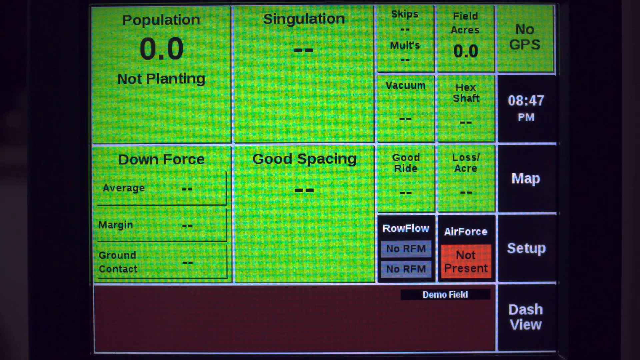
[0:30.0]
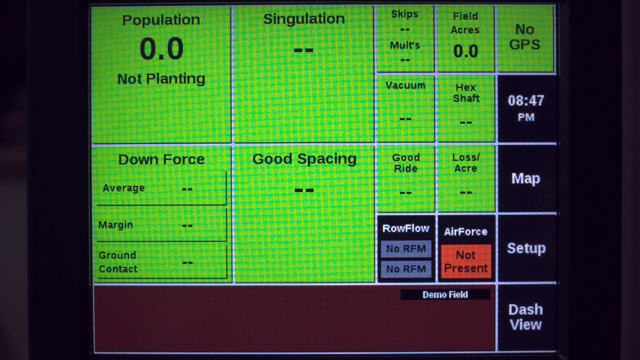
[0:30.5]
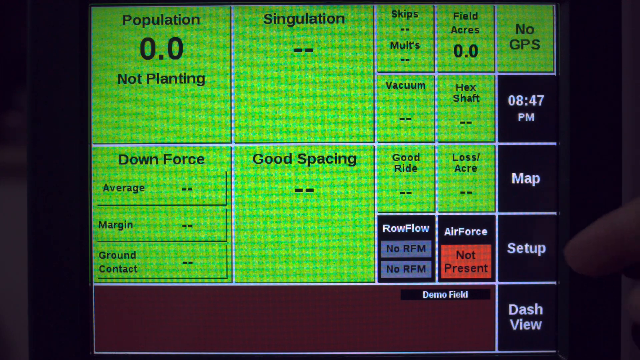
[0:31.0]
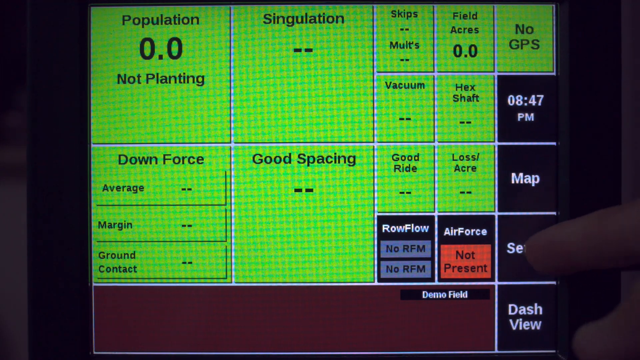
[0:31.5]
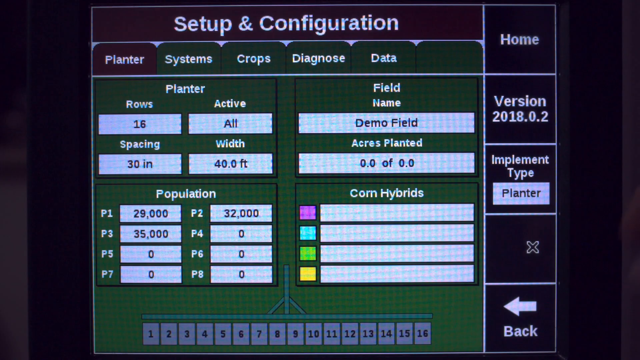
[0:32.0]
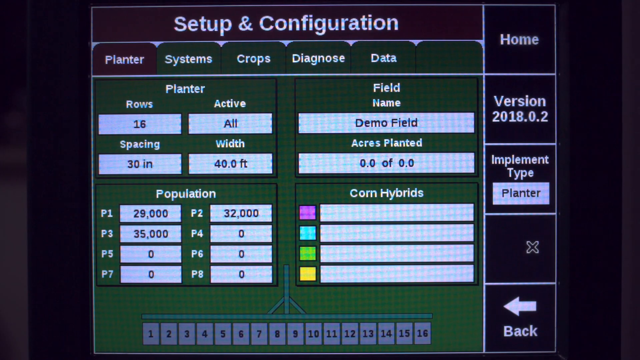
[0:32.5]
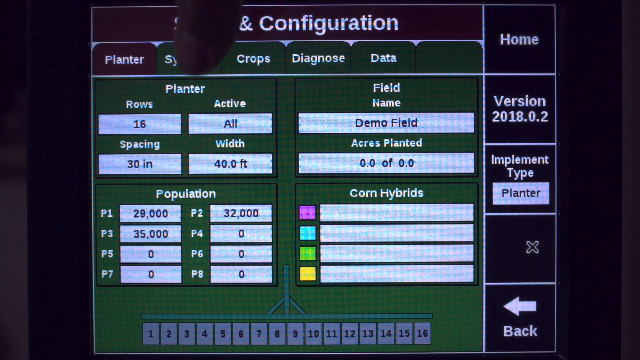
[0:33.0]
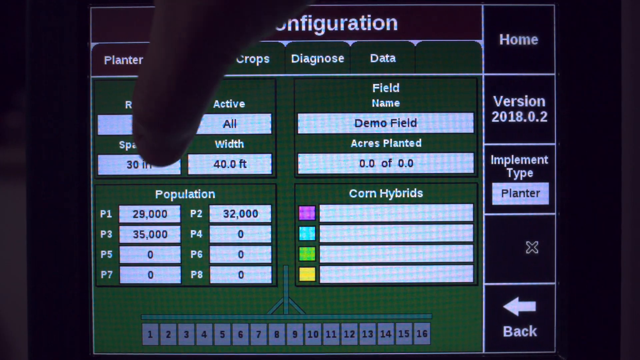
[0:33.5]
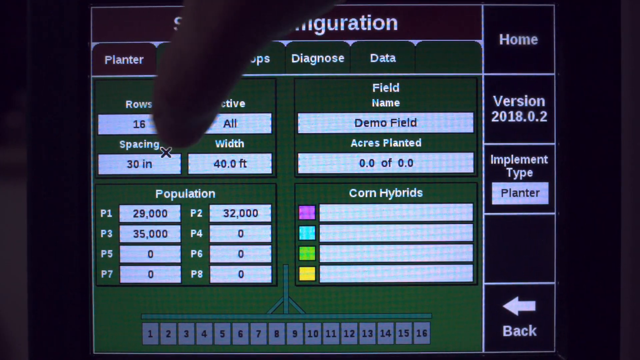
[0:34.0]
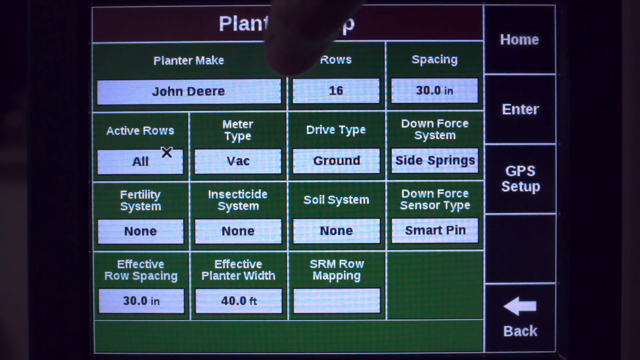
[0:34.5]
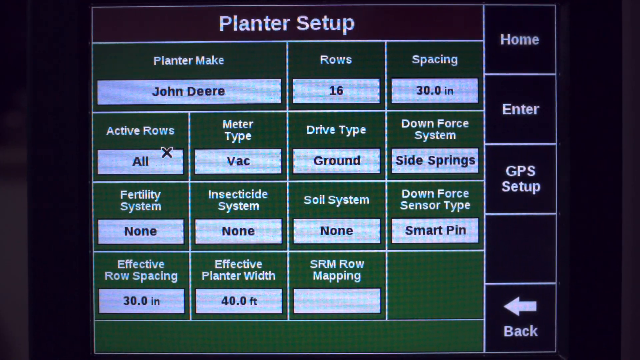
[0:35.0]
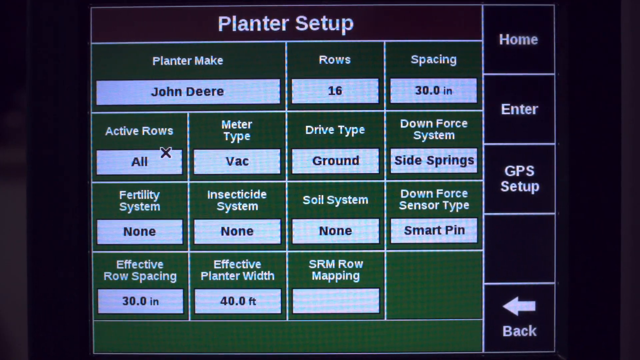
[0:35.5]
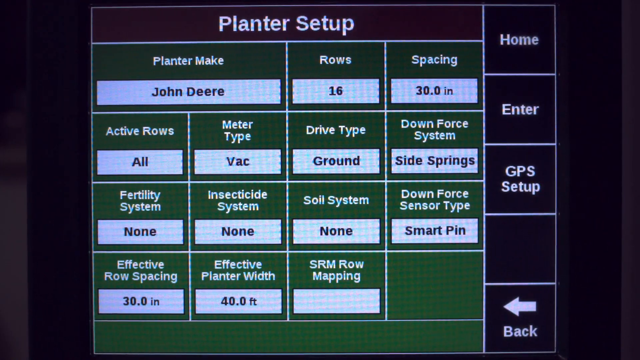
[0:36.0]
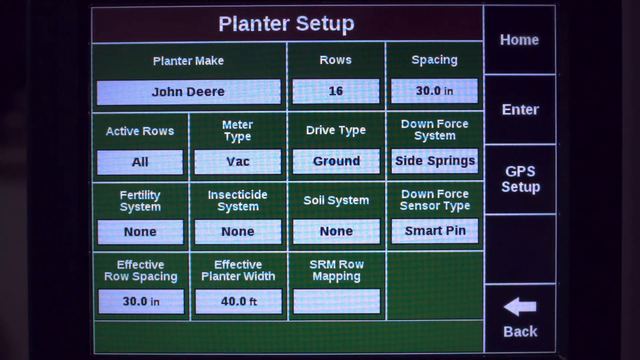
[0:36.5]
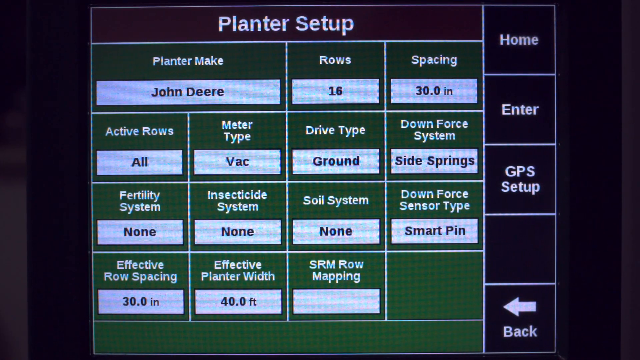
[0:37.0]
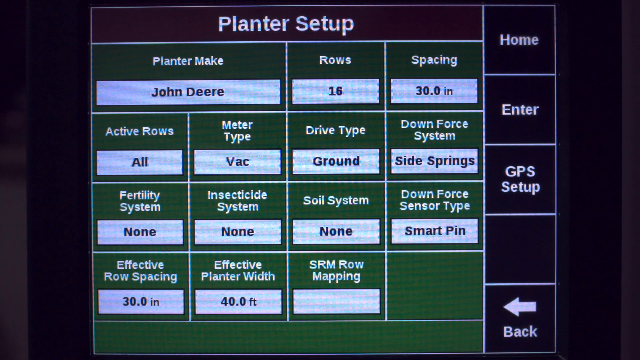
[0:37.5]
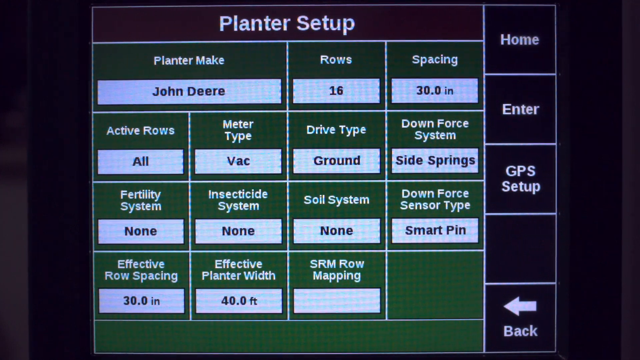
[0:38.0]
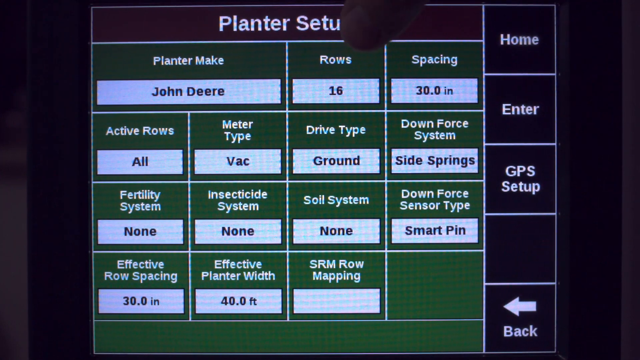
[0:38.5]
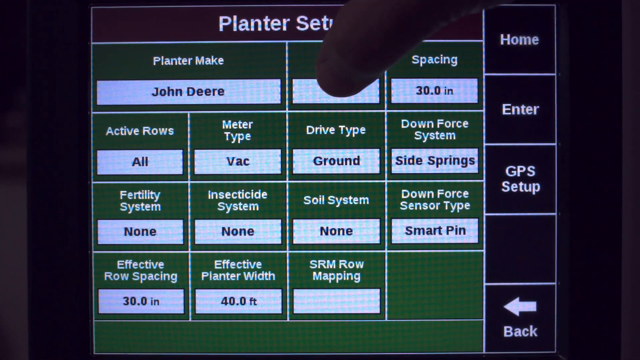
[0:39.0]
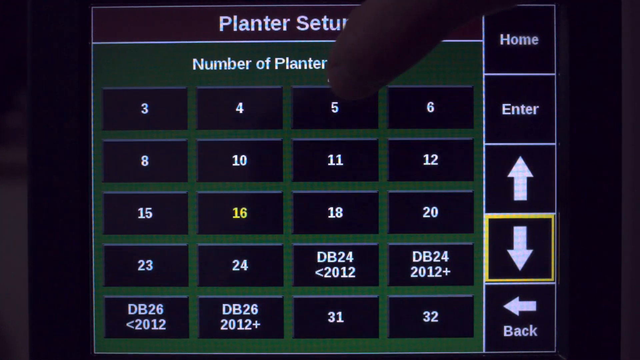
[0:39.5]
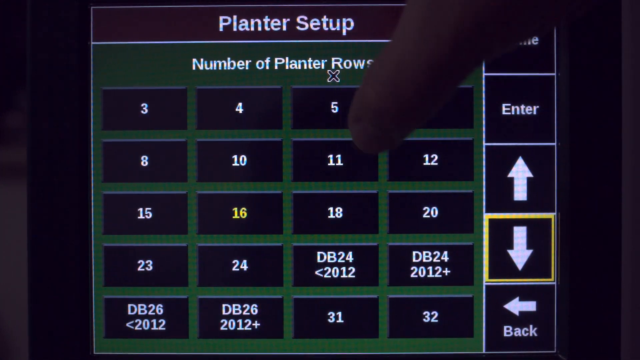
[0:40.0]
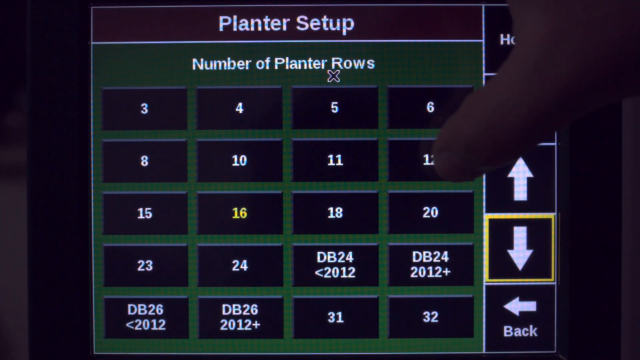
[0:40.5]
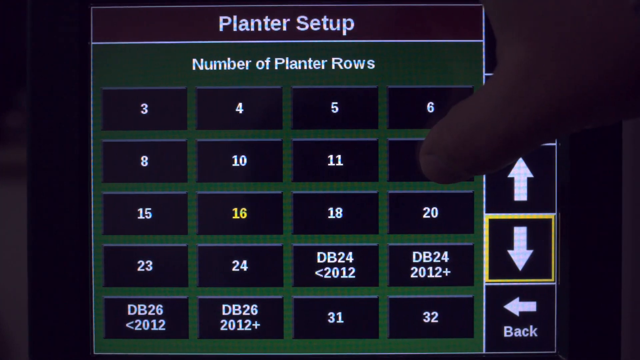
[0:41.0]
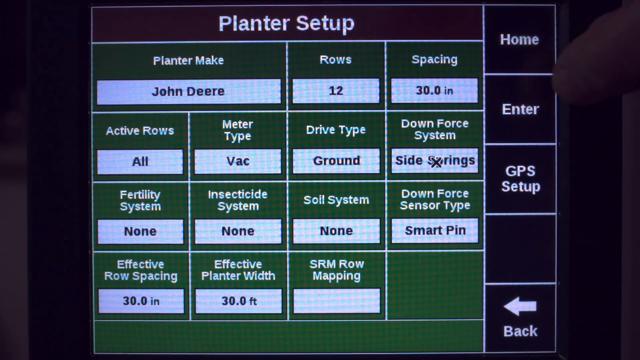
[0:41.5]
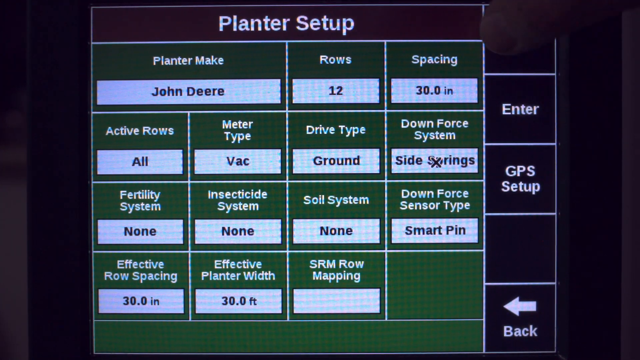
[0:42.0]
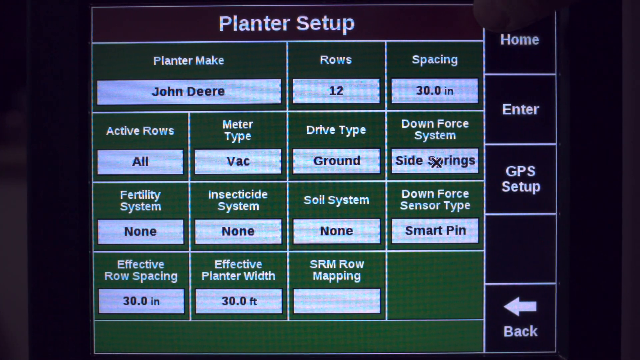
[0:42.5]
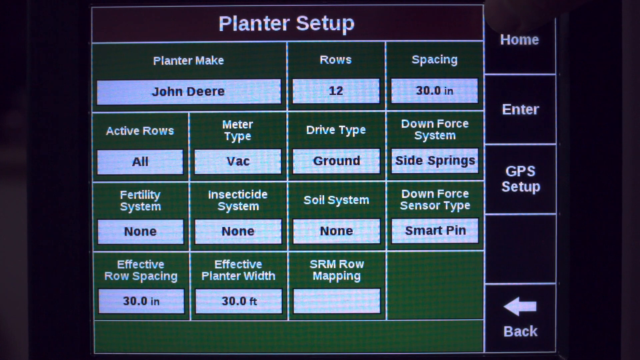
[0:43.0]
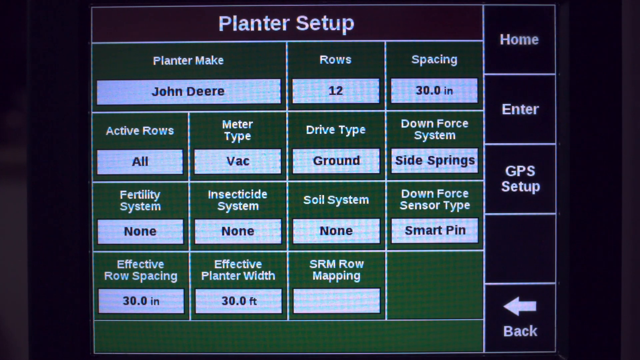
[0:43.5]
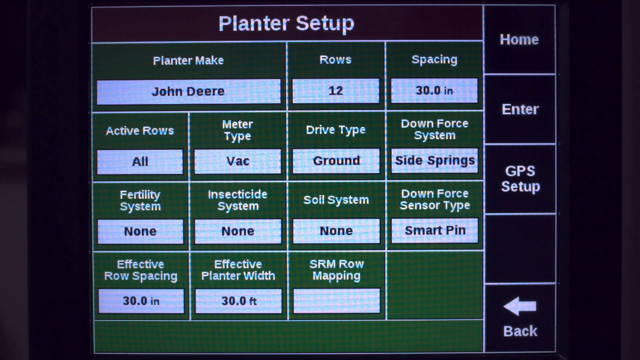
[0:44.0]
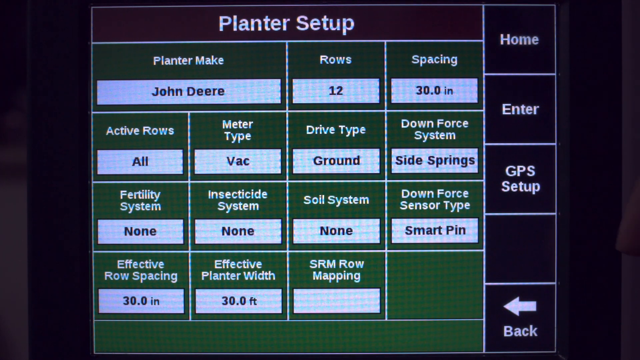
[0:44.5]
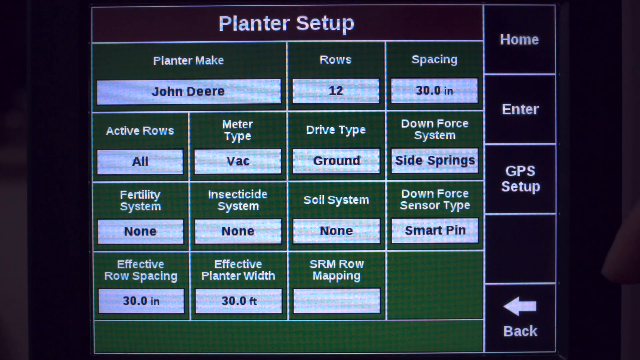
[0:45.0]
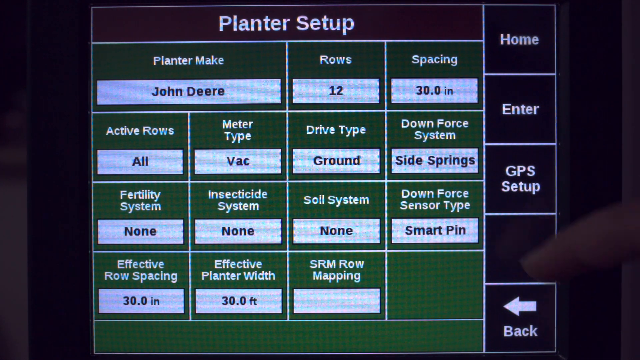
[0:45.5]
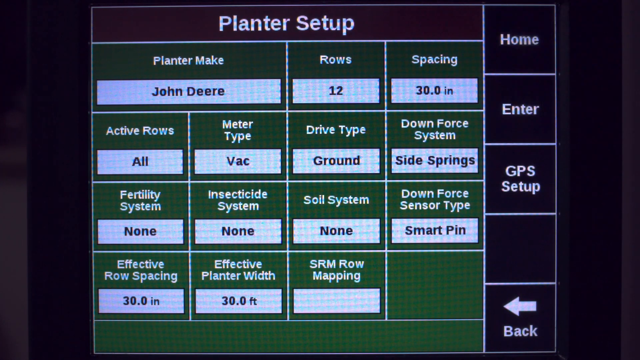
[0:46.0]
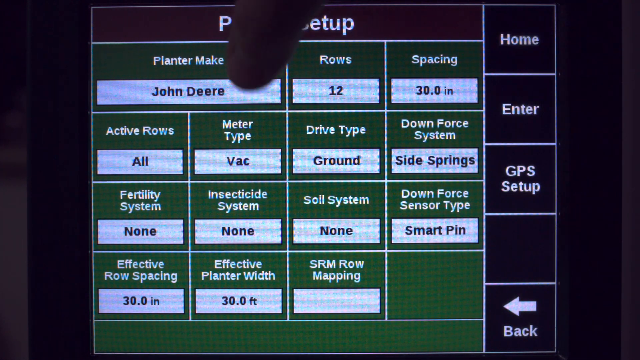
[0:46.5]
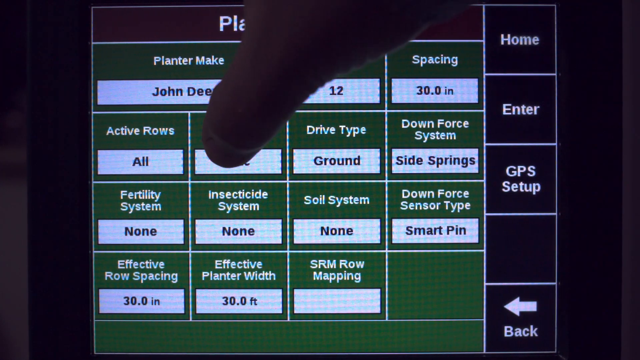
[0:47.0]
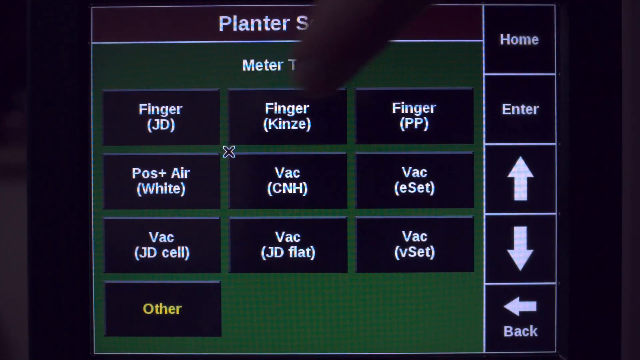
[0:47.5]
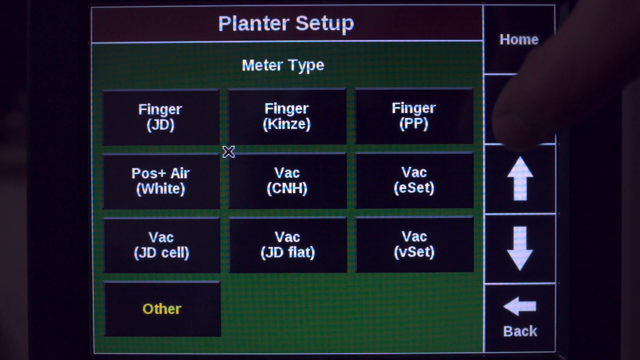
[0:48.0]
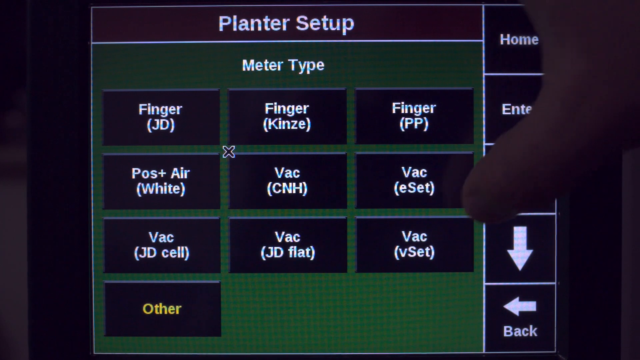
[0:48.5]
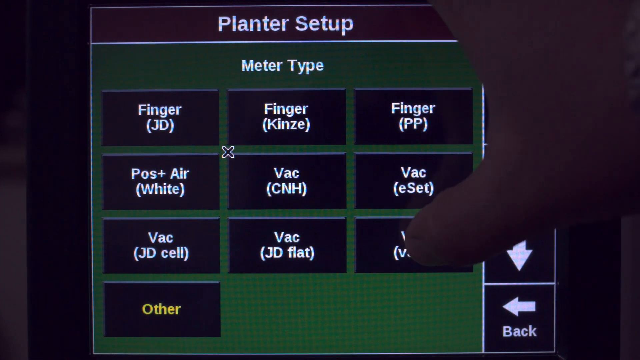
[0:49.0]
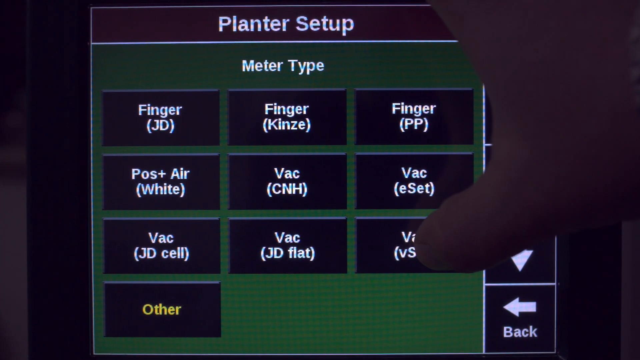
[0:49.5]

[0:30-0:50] A precision planting page shows boxes where information can be filled in. Several boxes are an almost fluorescent yellow, others are black, and some contain blue or red buttons. The upper left box reads "population 0.0 not planting". Other boxes read "singulation", "downforce", "good spacing", "skips", "field acres", "no GPS" and "vacuum", and one shows the time as 8:47 p.m. Others read "loss", "acre map" and "row flow". Later a setup and configuration screen appears, where "30 inches" has been selected. There is "planter make" with "John Deere", a "number of plants" field, an area for the number of rows, and a "planter setup" section with "row space". Different areas are clicked.